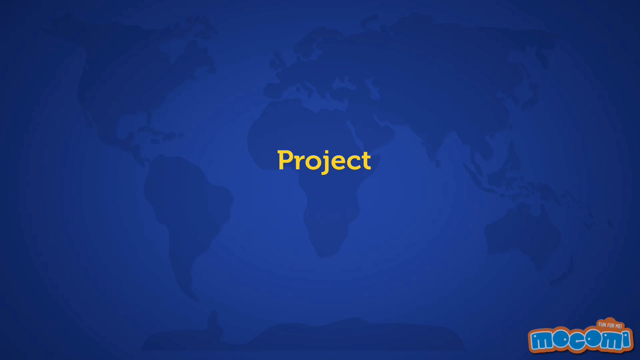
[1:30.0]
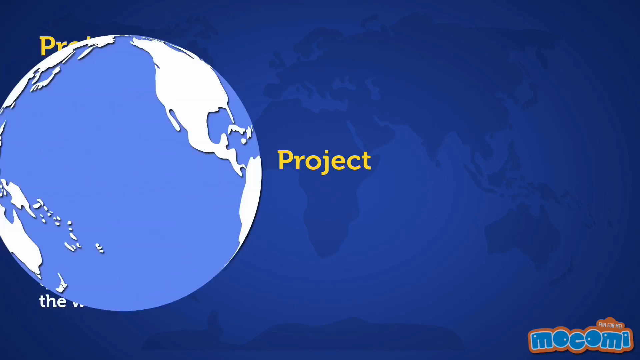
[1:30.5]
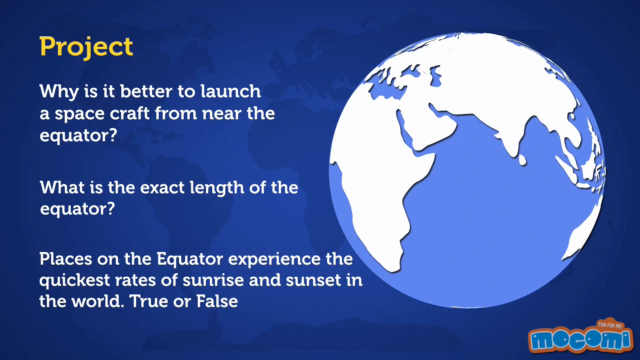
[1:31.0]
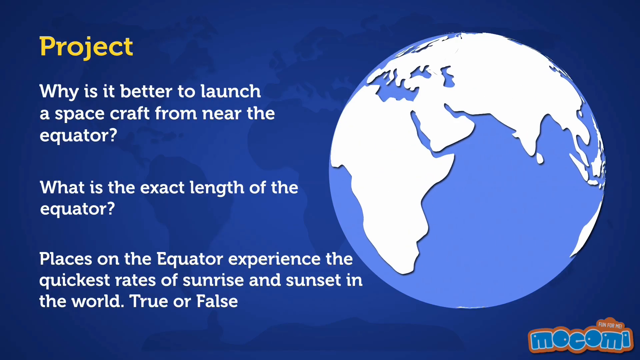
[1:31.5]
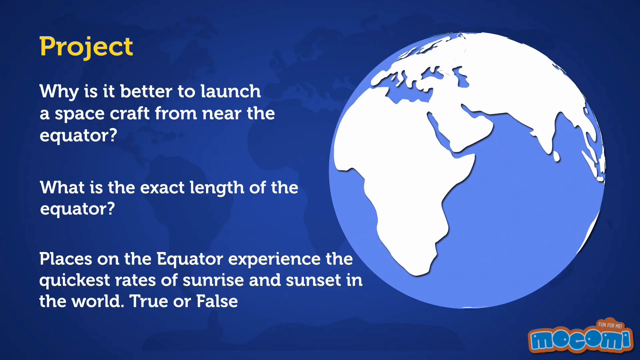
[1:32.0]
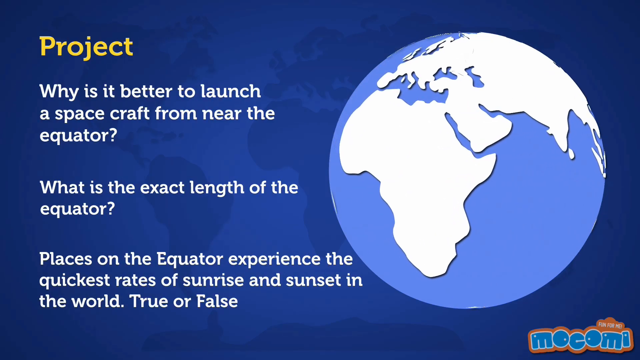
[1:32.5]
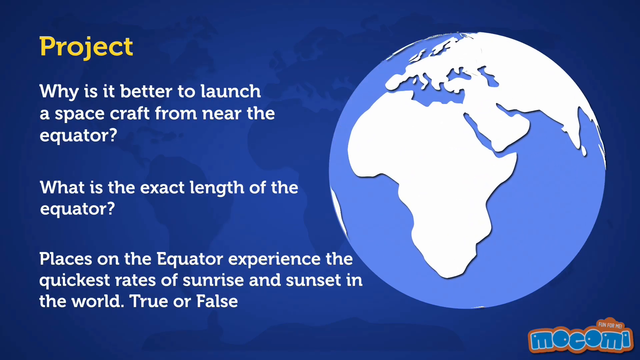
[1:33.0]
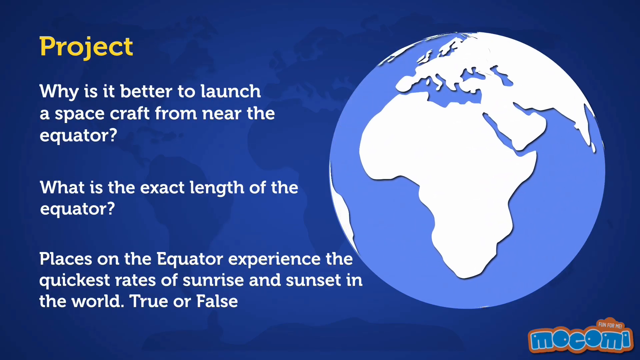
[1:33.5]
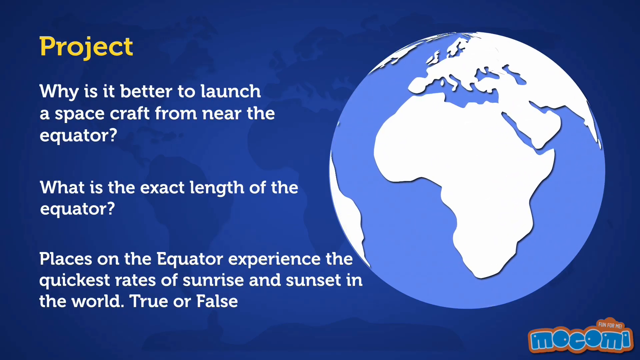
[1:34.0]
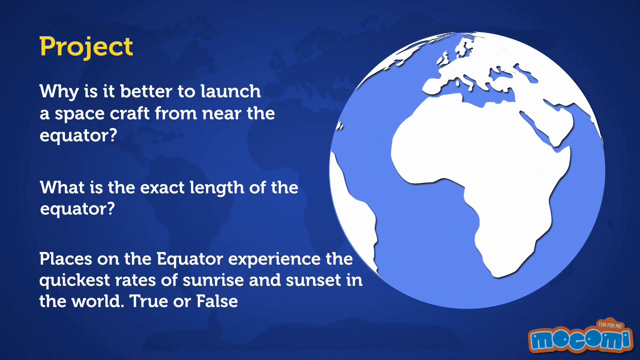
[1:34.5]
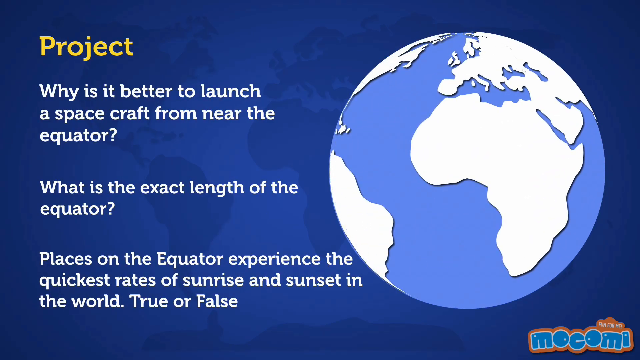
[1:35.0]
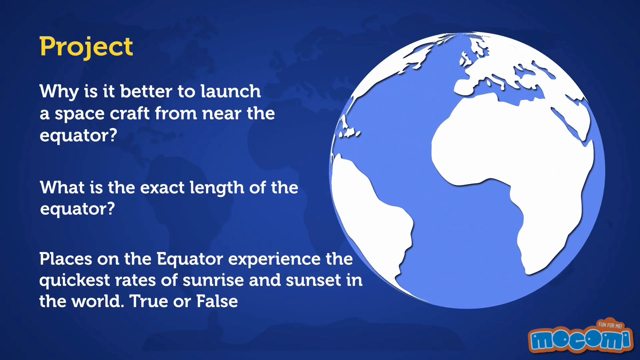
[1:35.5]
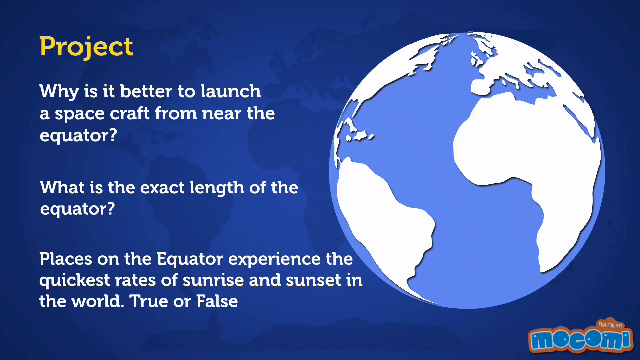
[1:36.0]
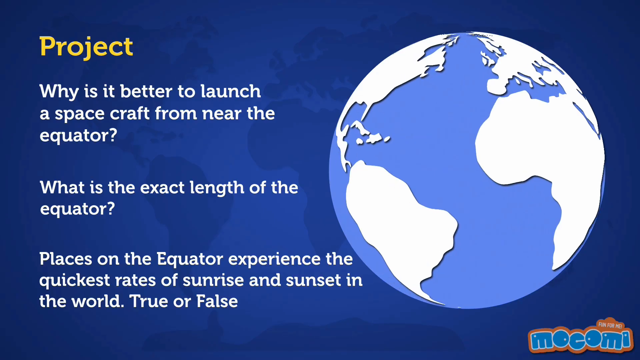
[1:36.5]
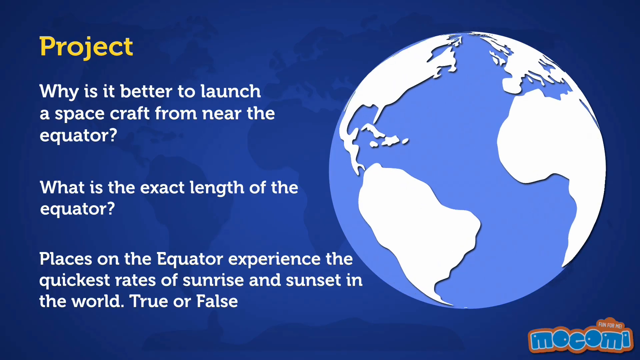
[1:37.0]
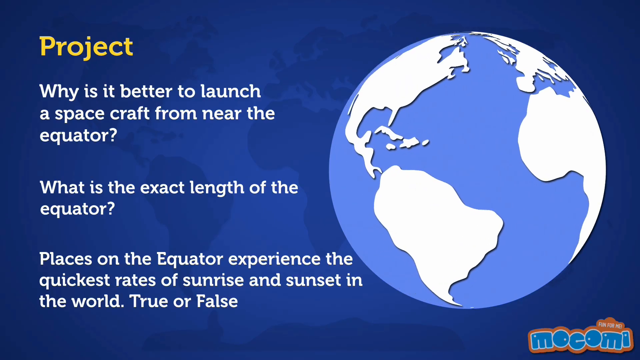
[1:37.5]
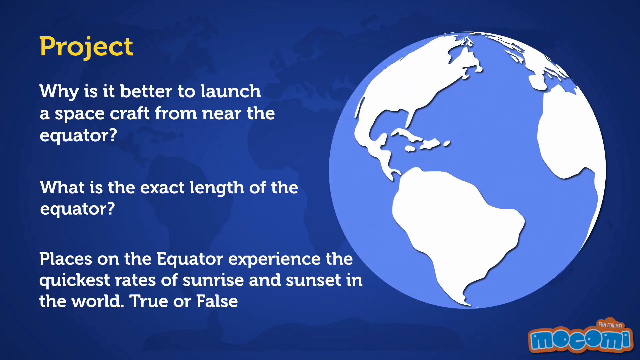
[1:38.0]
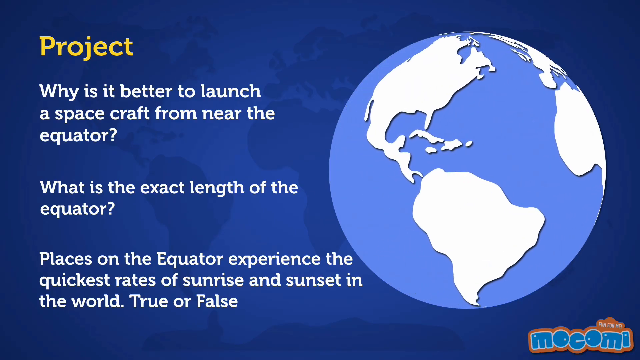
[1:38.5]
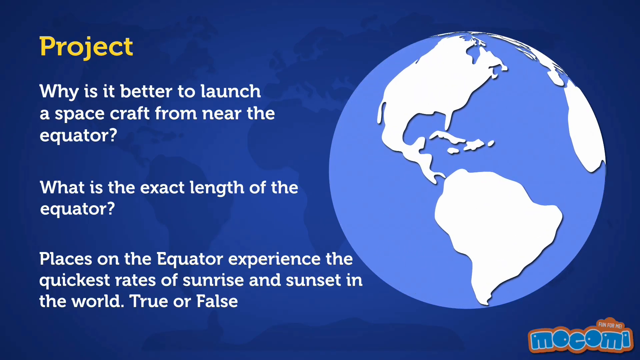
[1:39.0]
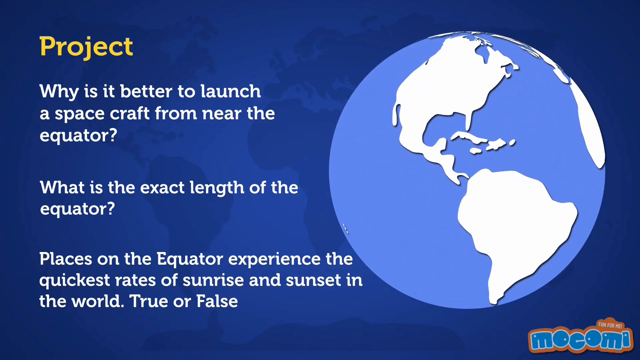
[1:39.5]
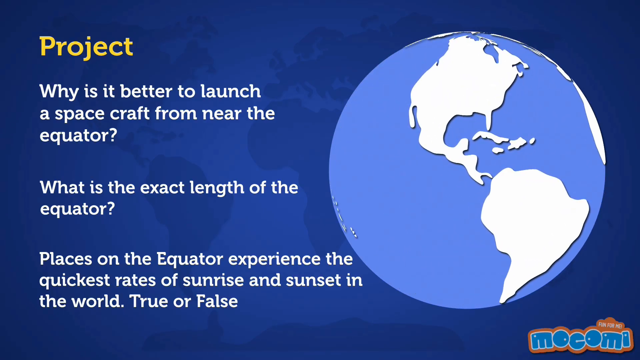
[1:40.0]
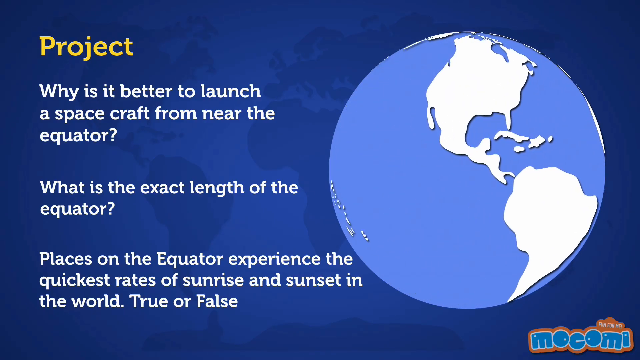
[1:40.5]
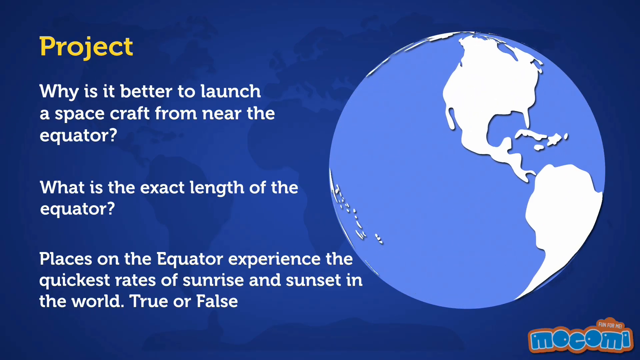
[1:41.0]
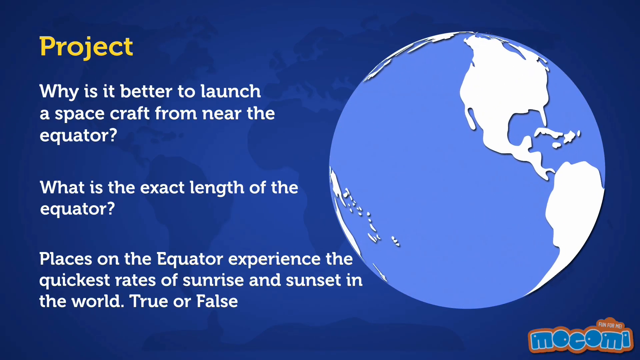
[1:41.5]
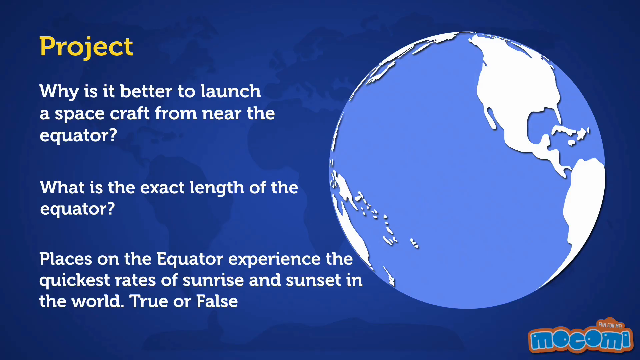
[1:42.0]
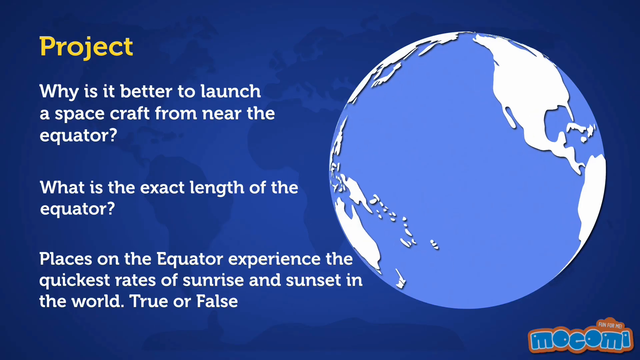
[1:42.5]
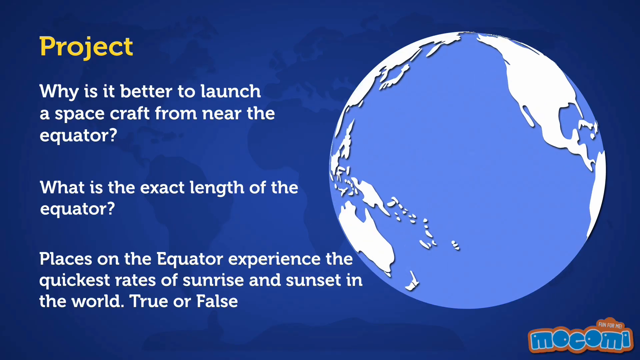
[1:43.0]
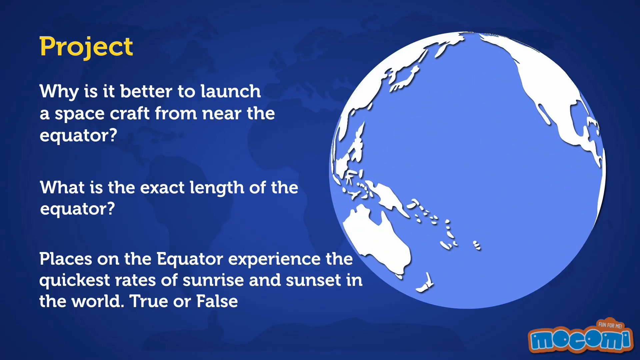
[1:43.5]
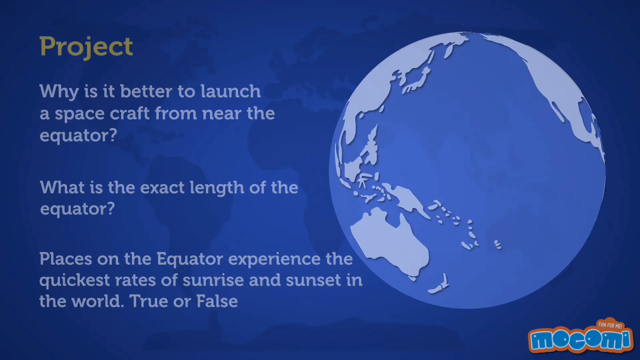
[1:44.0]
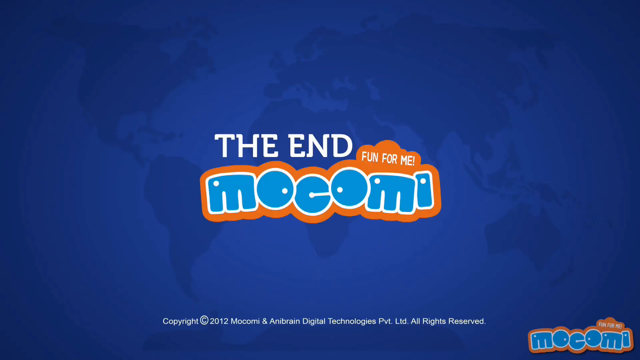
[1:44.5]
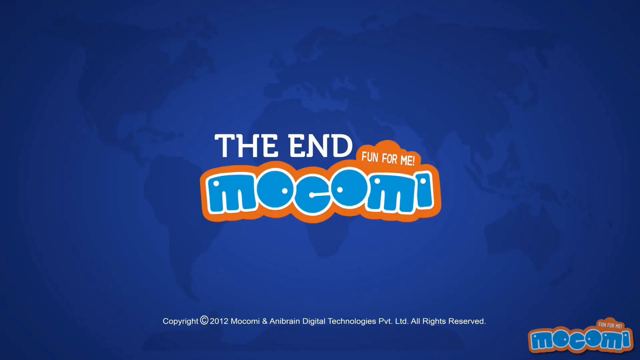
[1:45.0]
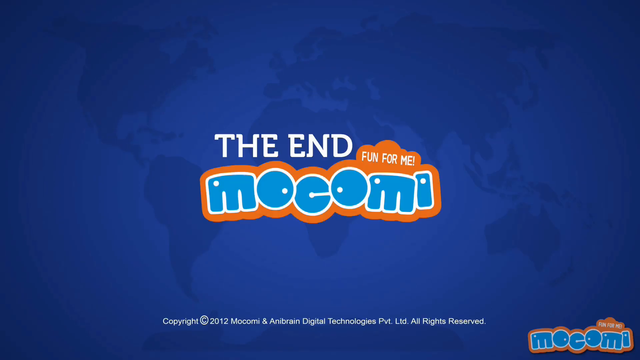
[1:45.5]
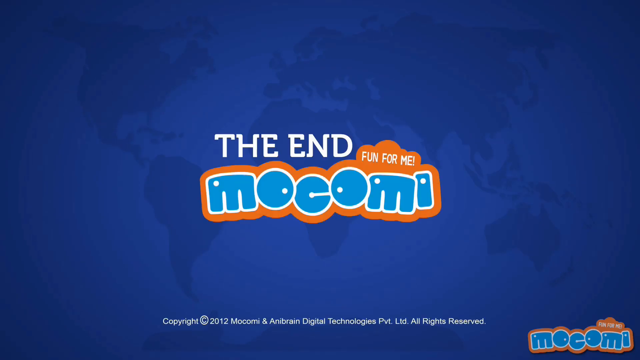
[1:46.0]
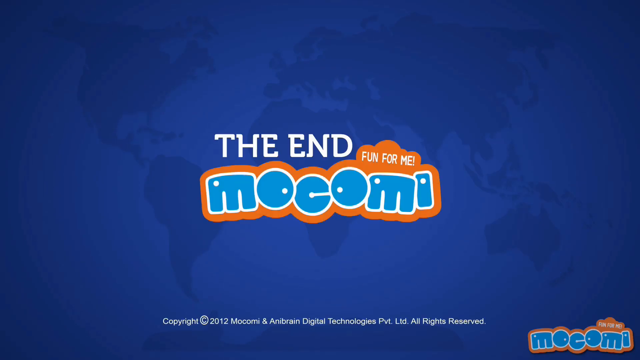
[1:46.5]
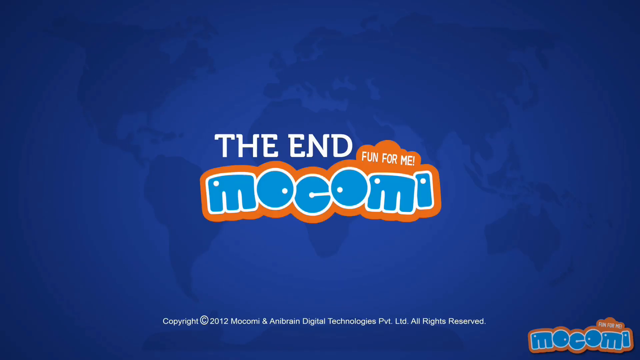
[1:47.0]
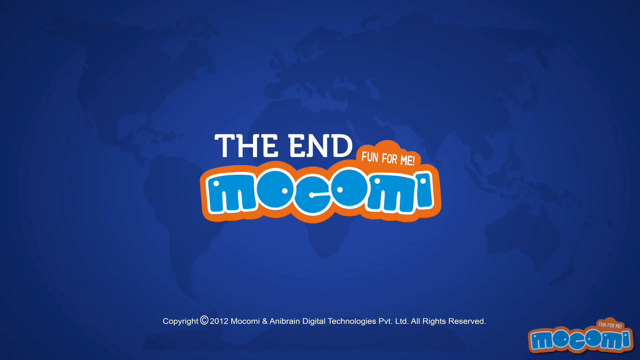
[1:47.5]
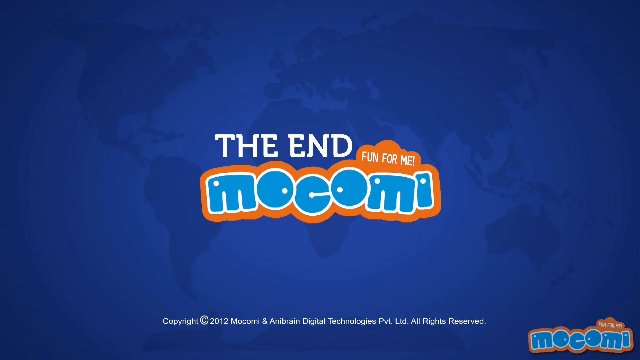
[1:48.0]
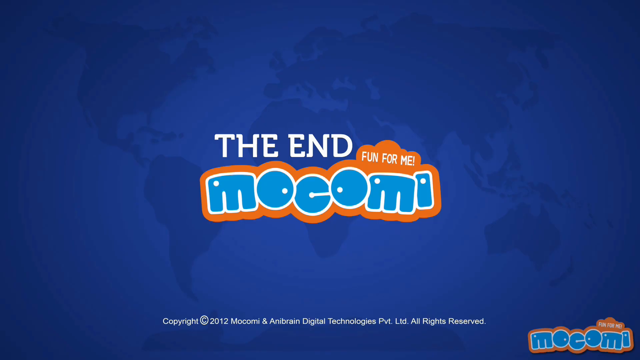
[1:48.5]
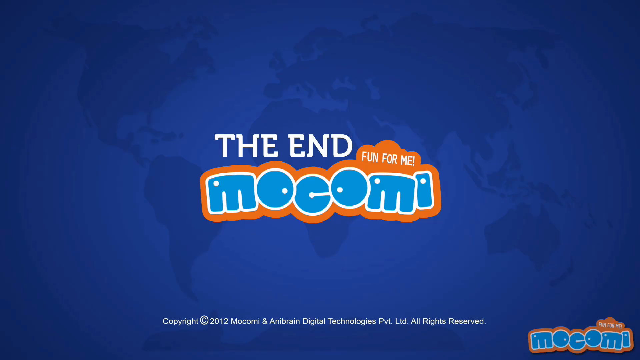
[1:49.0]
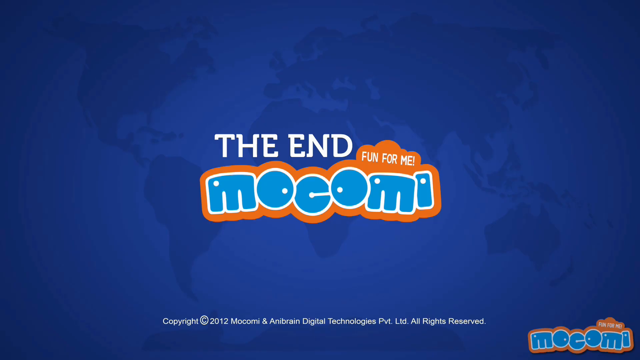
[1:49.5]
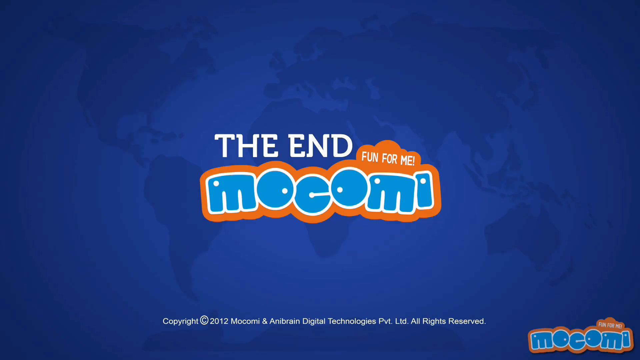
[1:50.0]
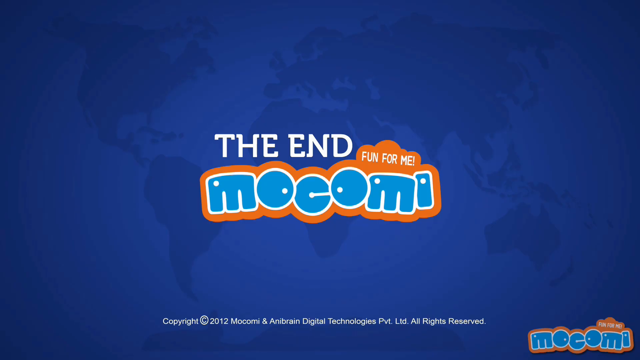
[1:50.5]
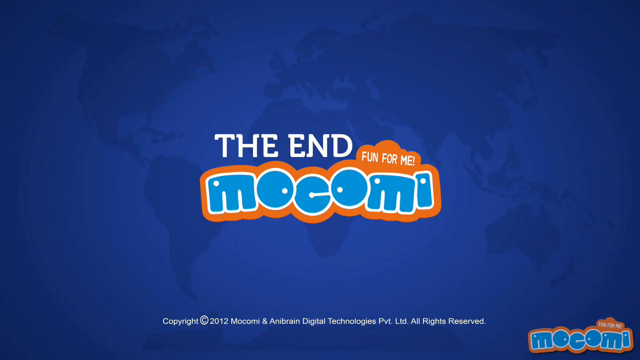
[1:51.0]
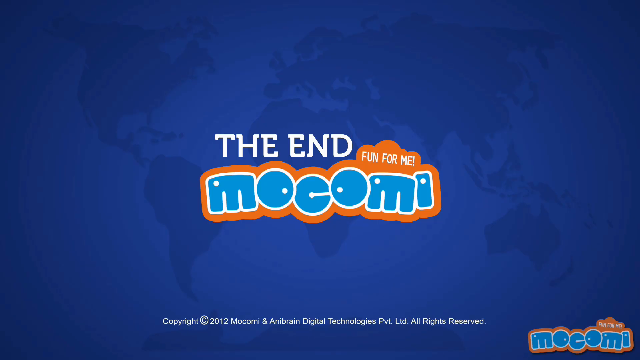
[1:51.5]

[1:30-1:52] The video continues from the word "project". At the very end, the company's name and logo are shown, along with the words "the end".